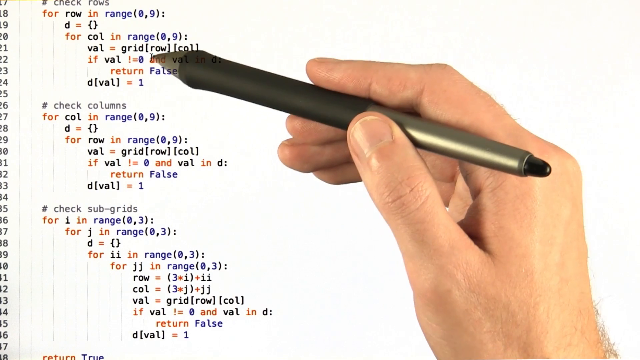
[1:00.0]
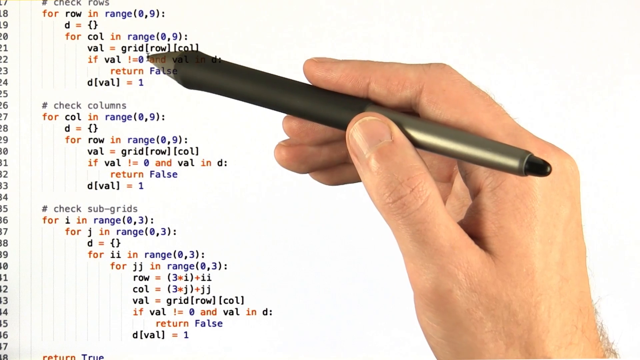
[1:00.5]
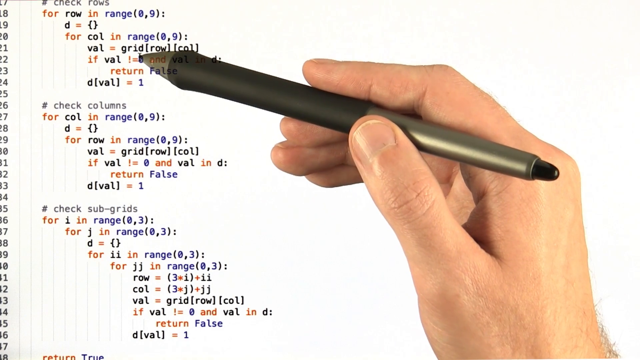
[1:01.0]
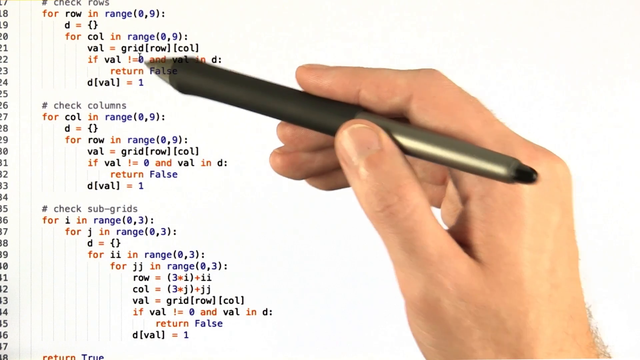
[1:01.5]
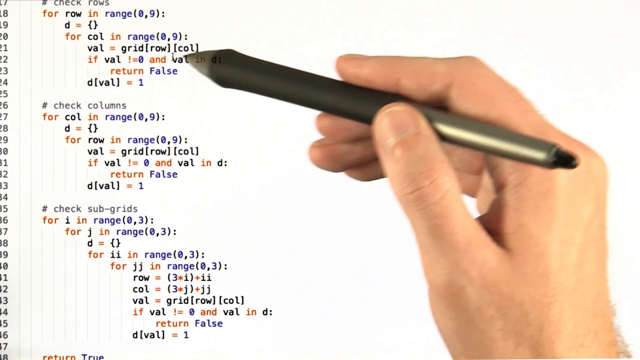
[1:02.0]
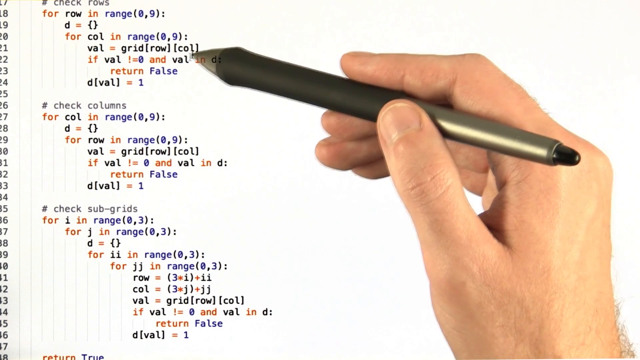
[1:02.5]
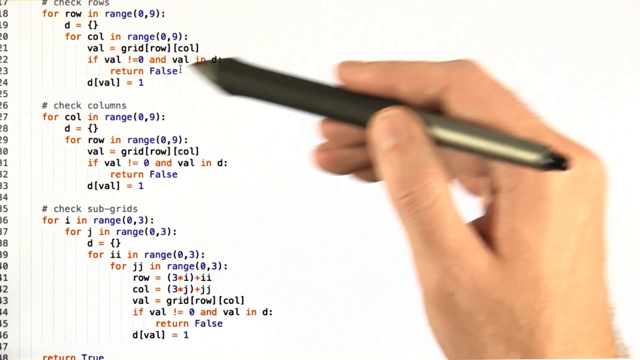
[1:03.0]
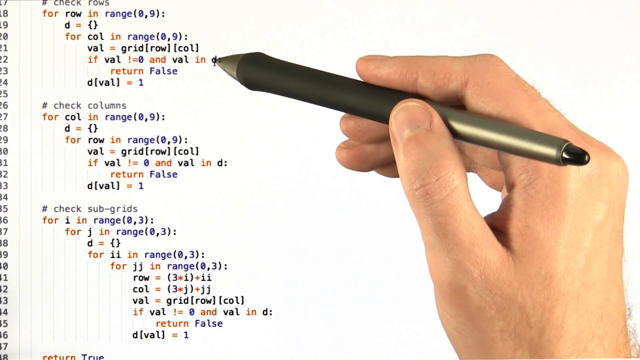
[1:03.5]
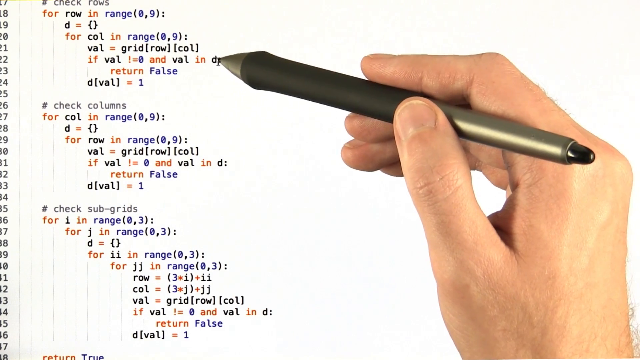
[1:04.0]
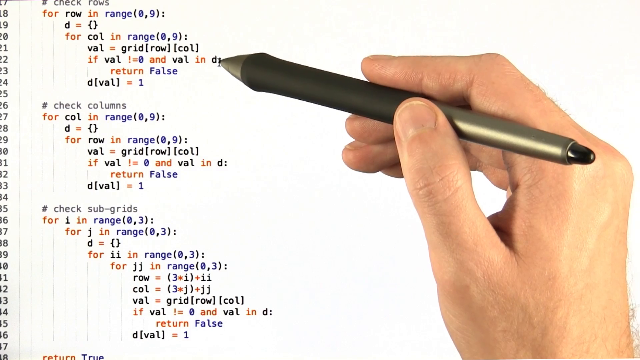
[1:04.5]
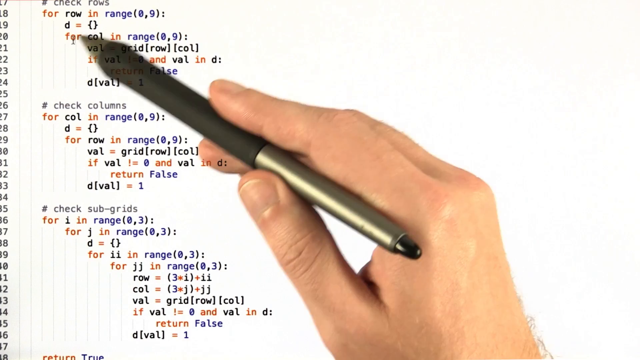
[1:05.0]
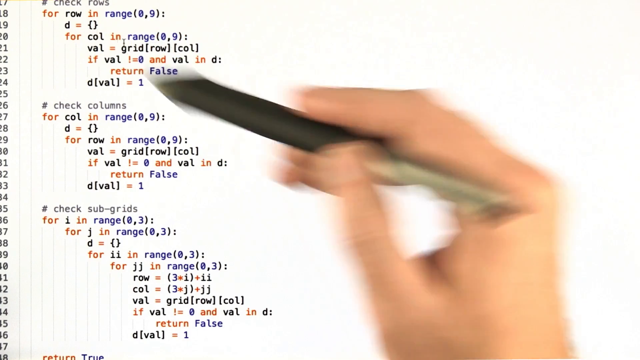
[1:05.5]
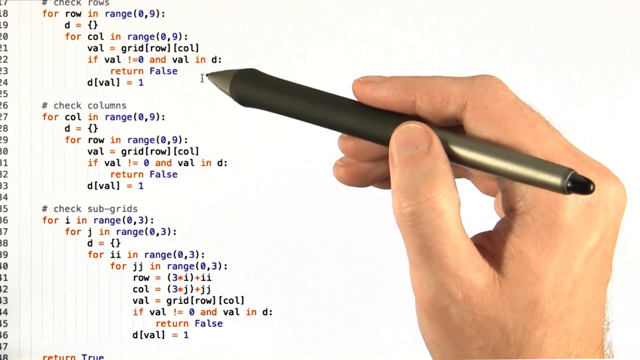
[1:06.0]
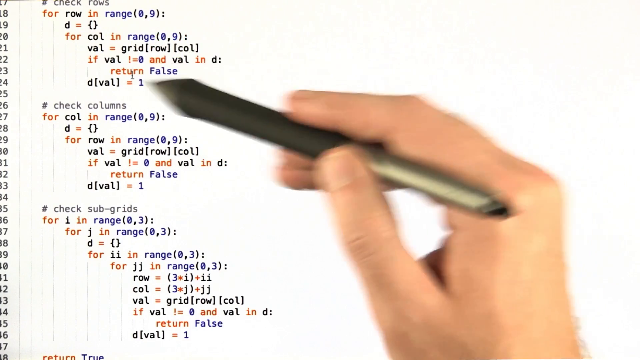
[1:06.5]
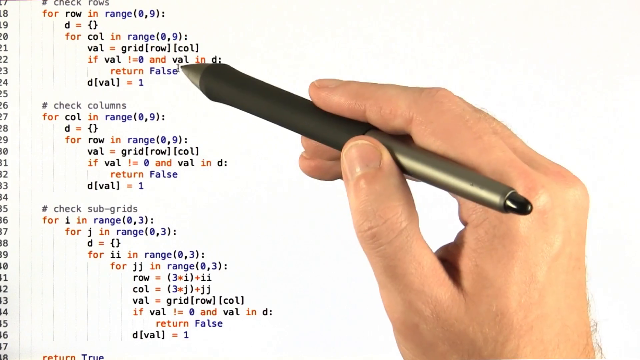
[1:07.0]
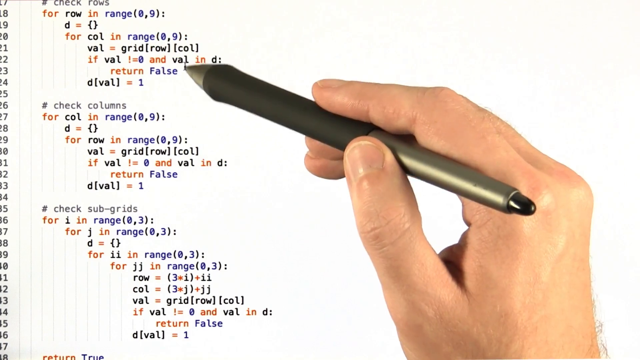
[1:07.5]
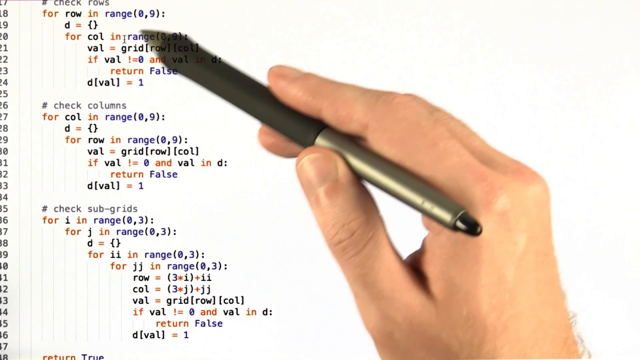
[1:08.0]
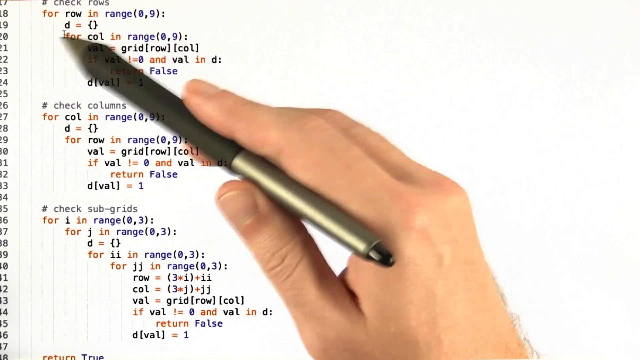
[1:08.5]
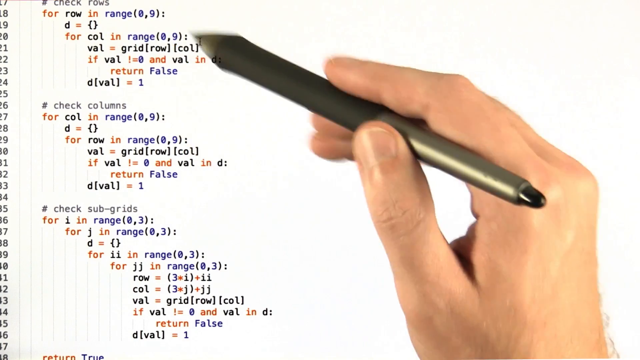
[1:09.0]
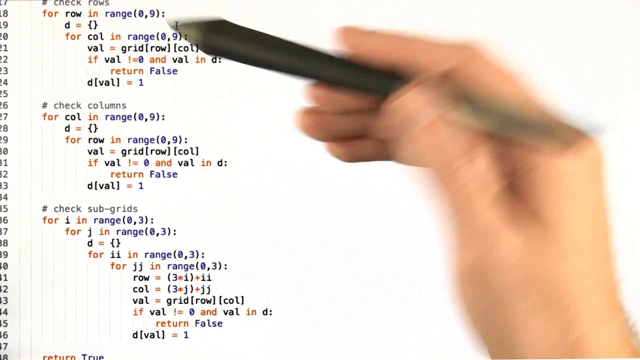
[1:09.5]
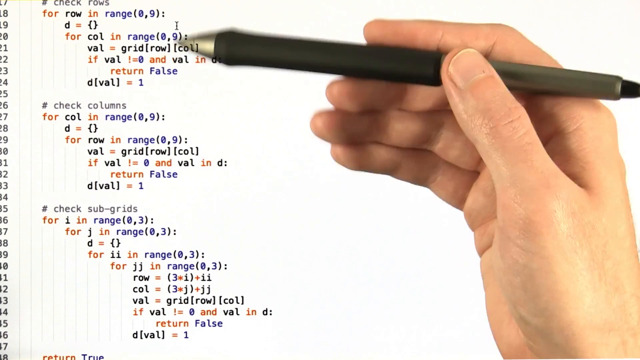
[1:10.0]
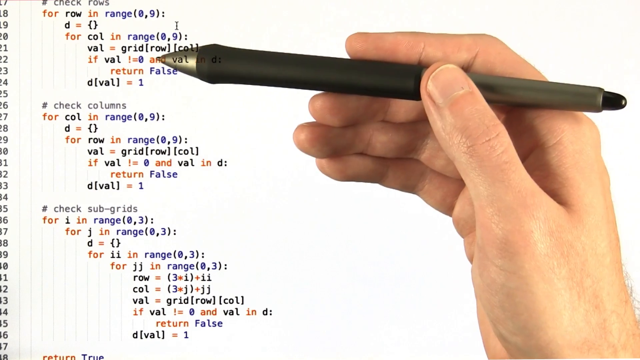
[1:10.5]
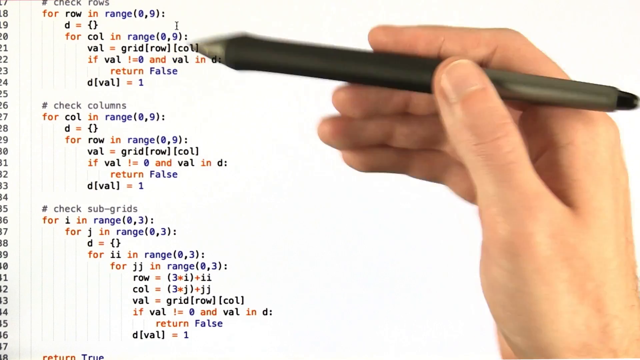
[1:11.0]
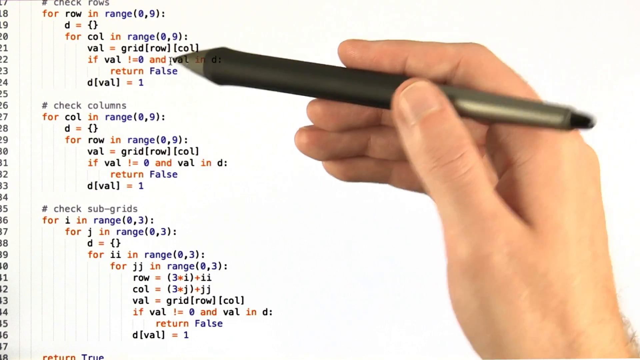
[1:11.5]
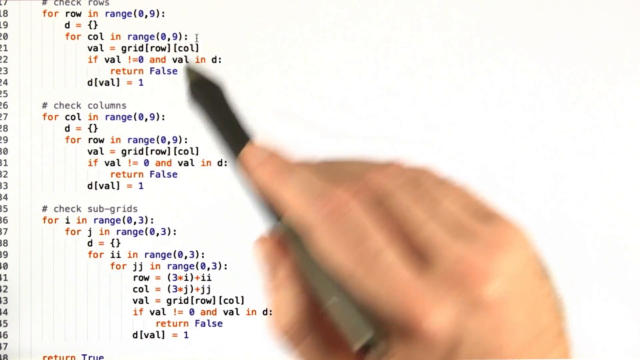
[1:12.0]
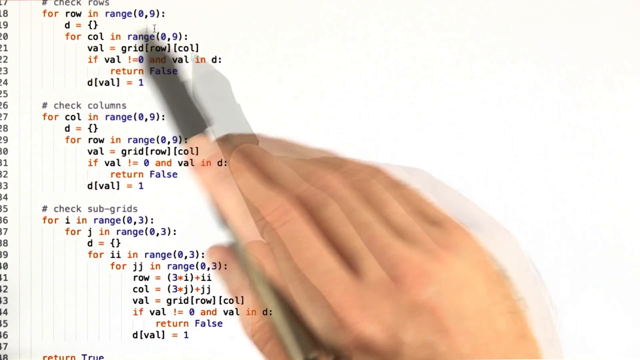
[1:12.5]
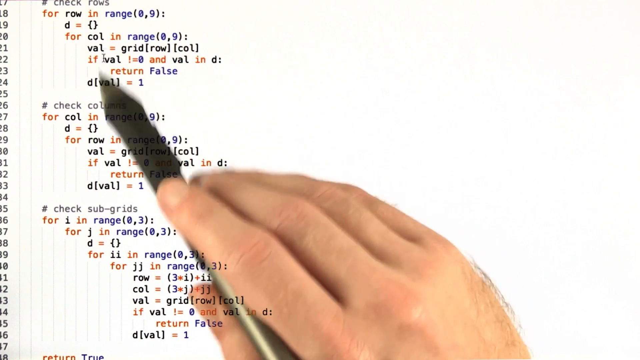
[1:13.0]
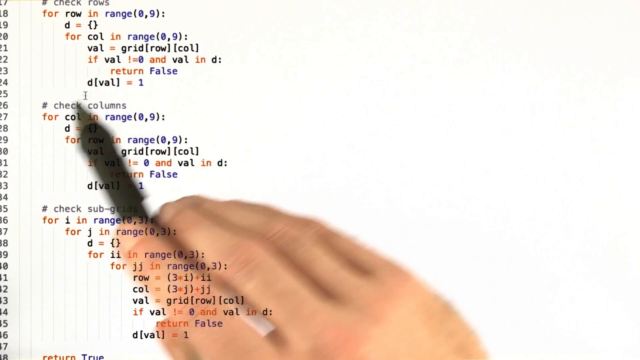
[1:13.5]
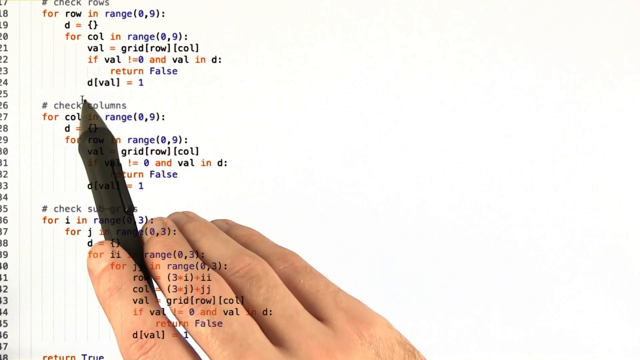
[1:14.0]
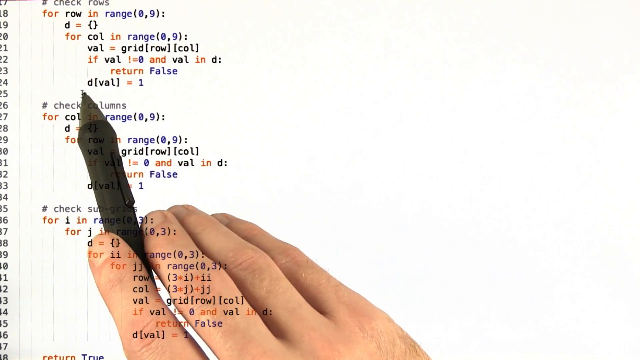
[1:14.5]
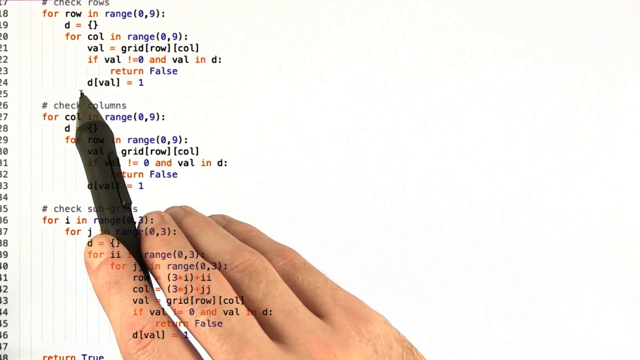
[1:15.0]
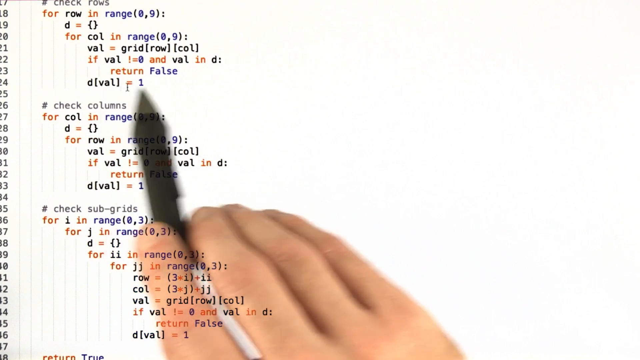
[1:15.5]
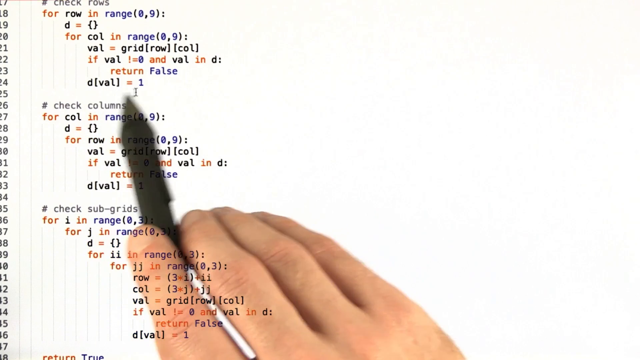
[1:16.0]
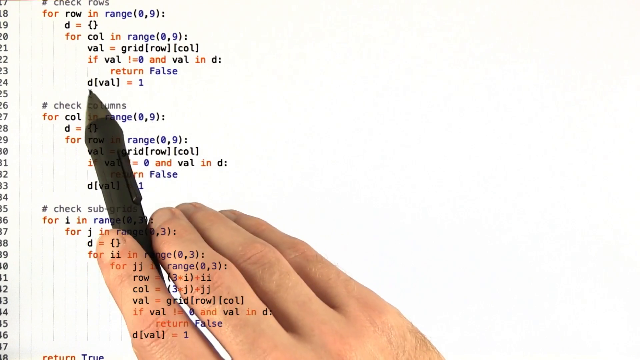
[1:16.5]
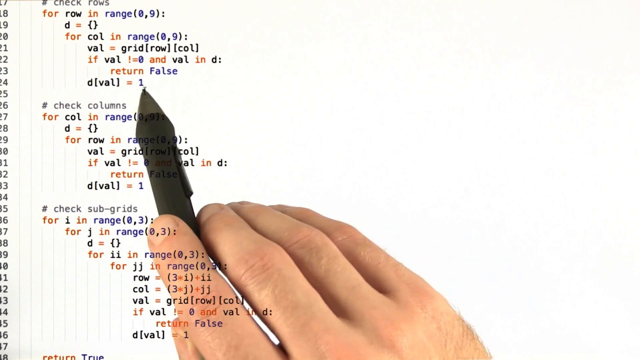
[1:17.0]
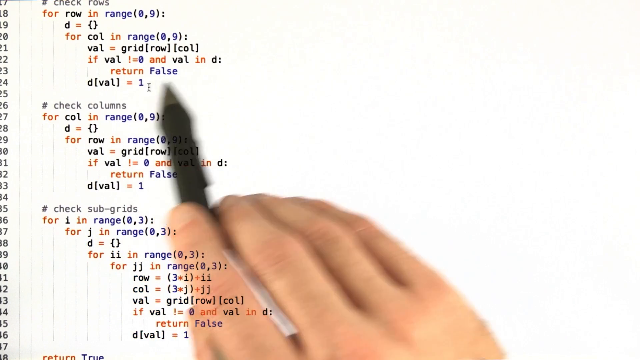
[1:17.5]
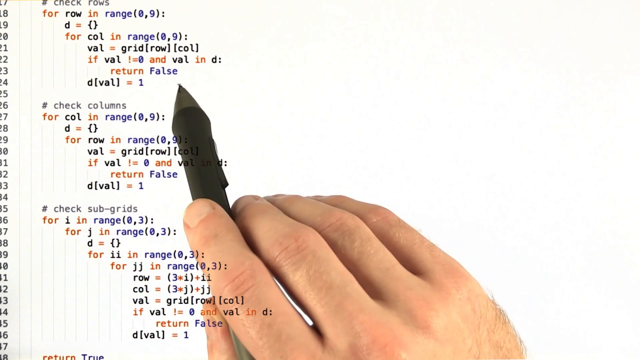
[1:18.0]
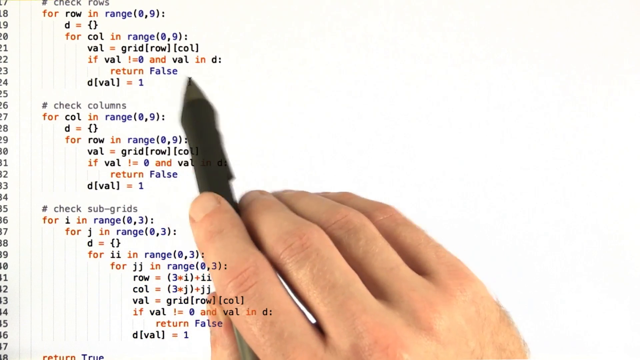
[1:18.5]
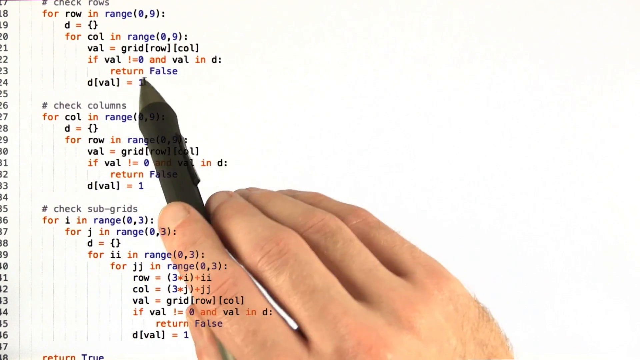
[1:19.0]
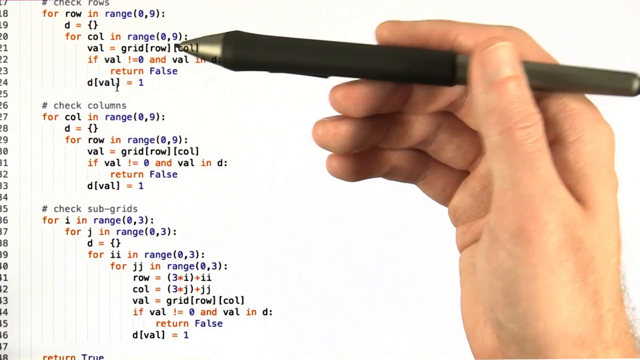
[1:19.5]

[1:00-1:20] A person's right hand holds the digital pen, pointing out certain parts of the code, moving left to right across different areas as if explaining what the lines do. There are about 20 lines of code, with row numbers on the left-hand side running from what looks like 17 down to about 44. The font is orange, purplish blue and black, depending on the type of code.